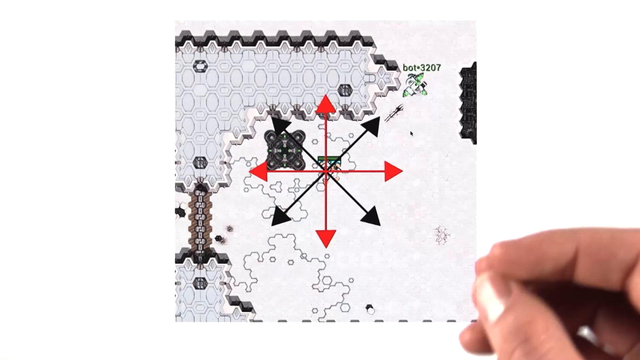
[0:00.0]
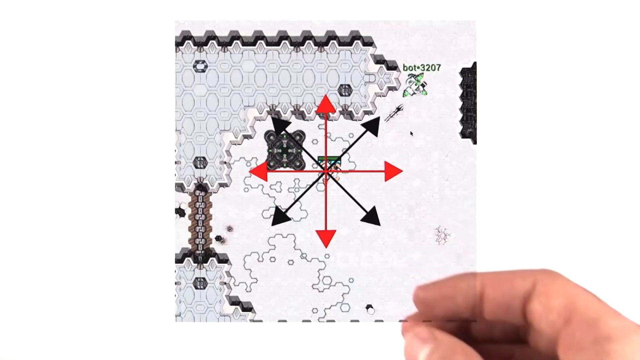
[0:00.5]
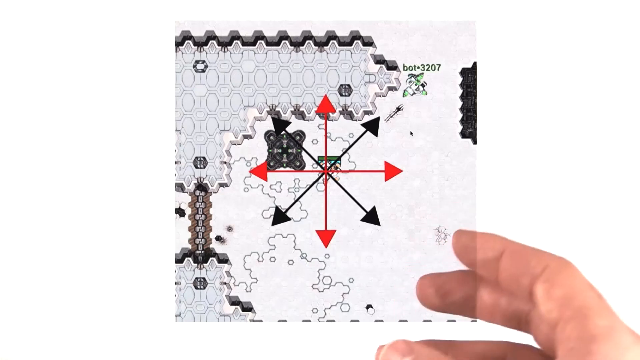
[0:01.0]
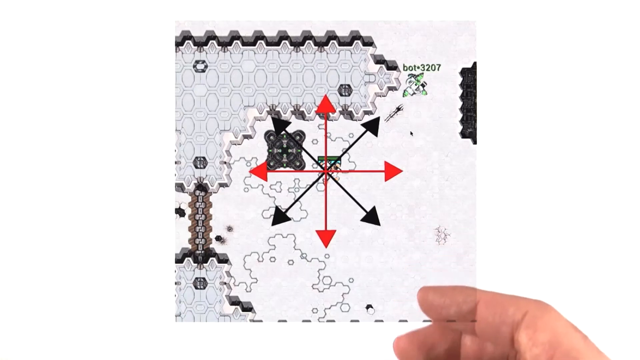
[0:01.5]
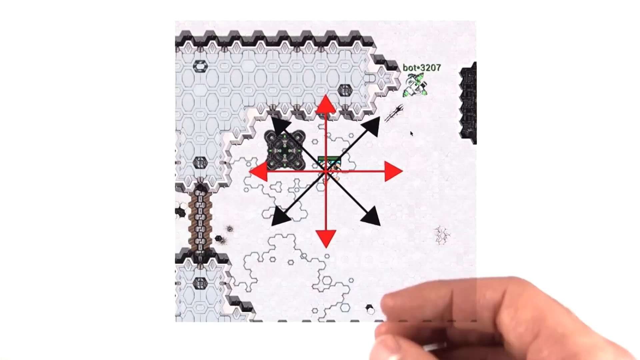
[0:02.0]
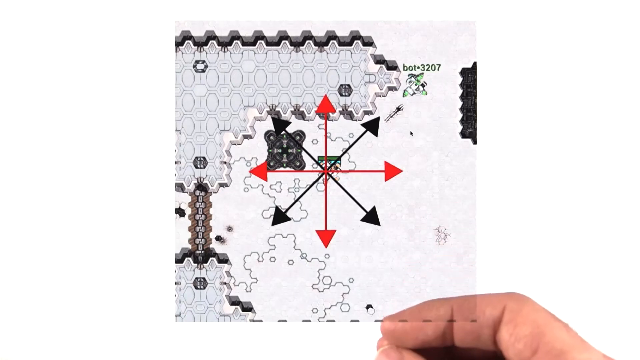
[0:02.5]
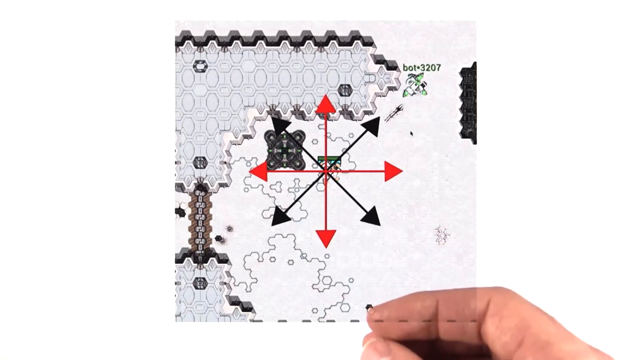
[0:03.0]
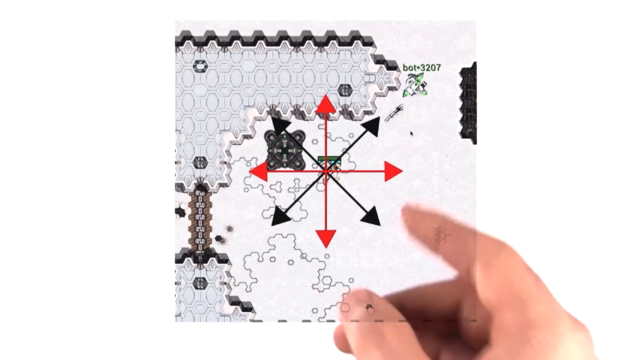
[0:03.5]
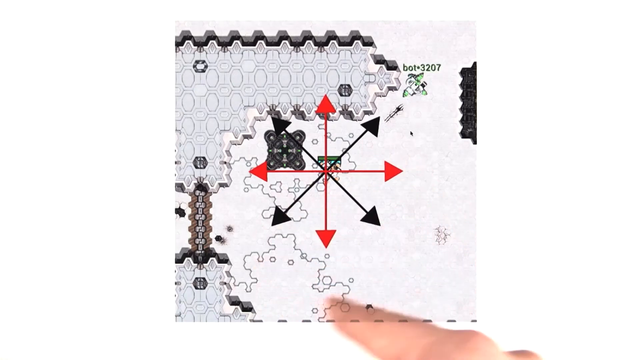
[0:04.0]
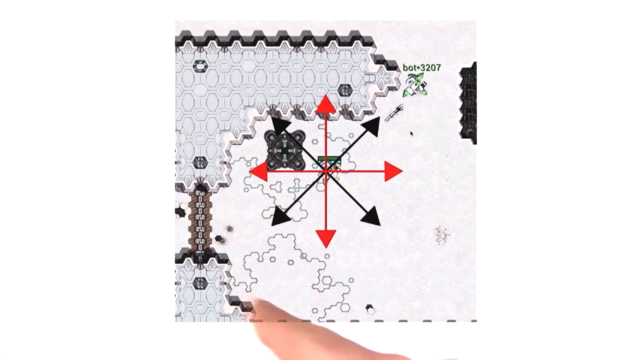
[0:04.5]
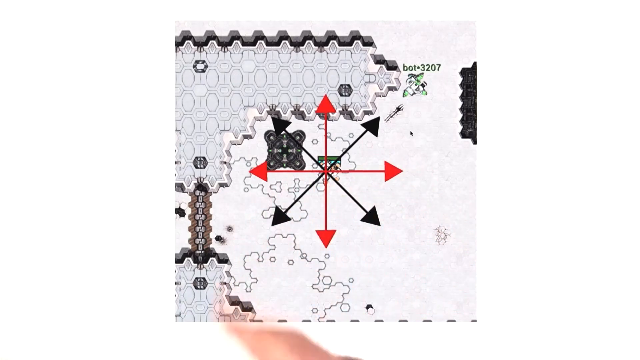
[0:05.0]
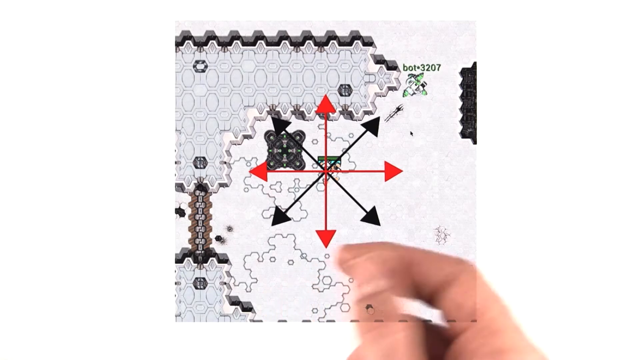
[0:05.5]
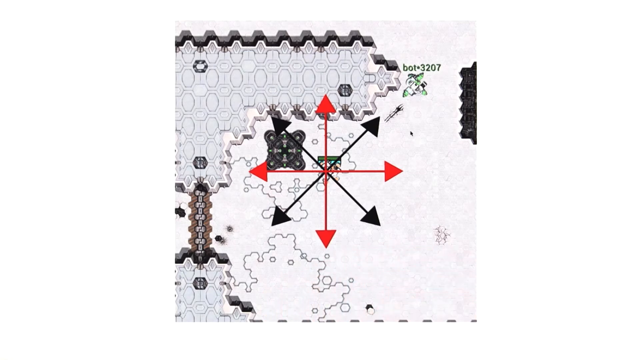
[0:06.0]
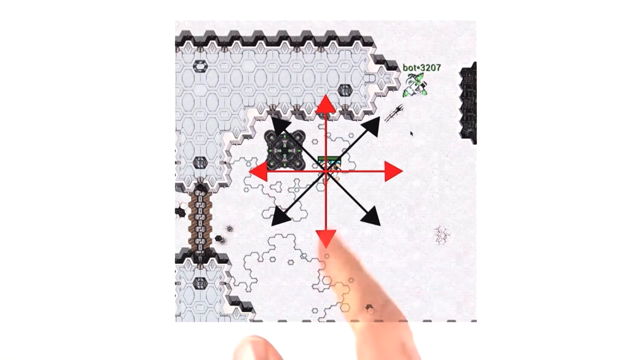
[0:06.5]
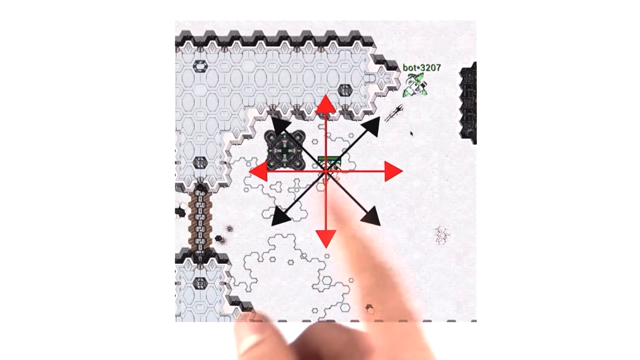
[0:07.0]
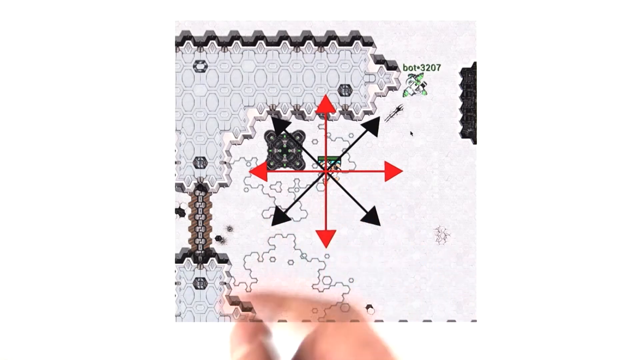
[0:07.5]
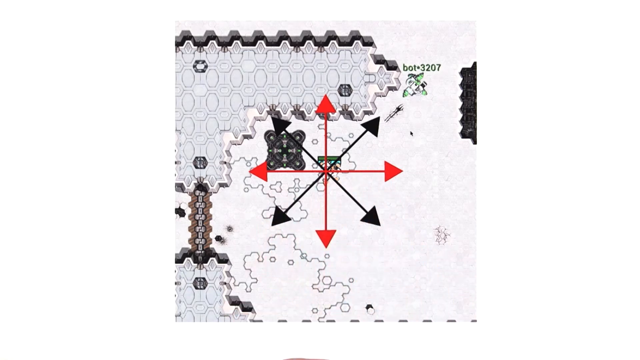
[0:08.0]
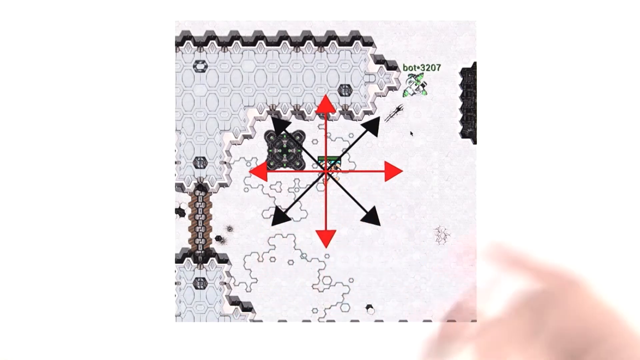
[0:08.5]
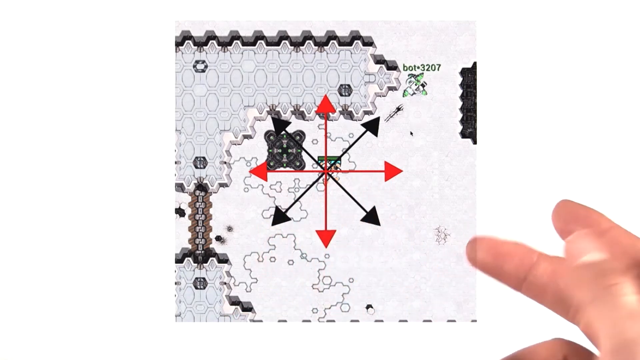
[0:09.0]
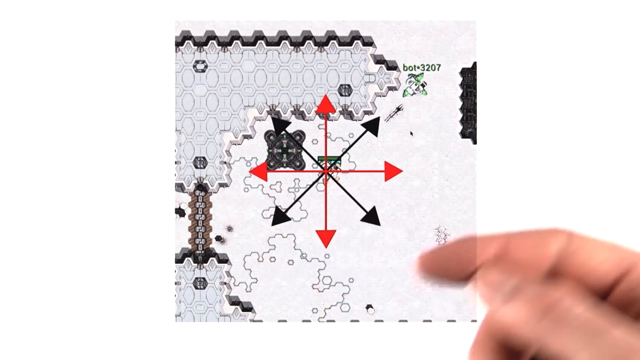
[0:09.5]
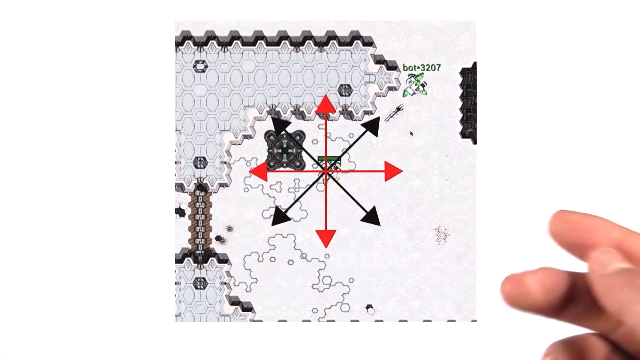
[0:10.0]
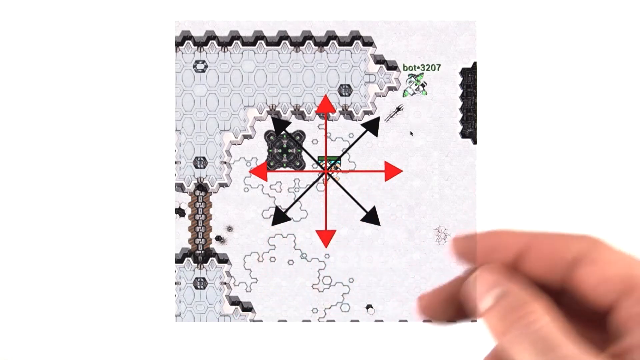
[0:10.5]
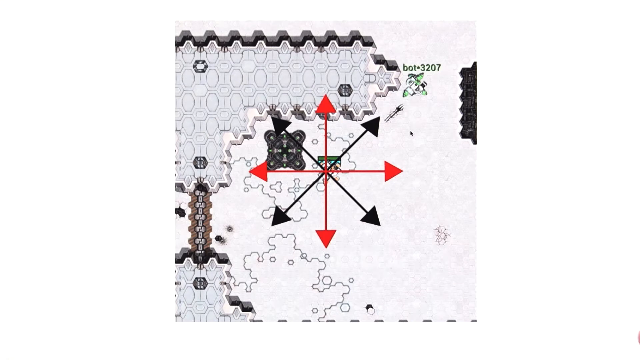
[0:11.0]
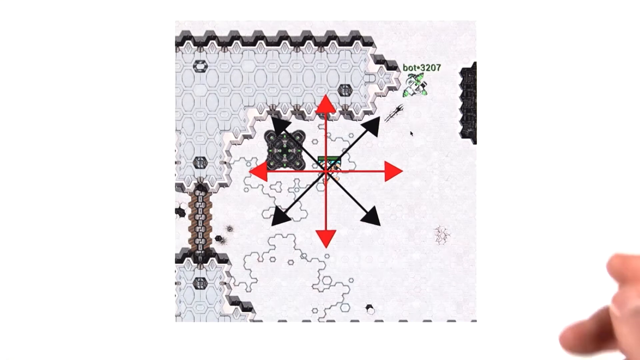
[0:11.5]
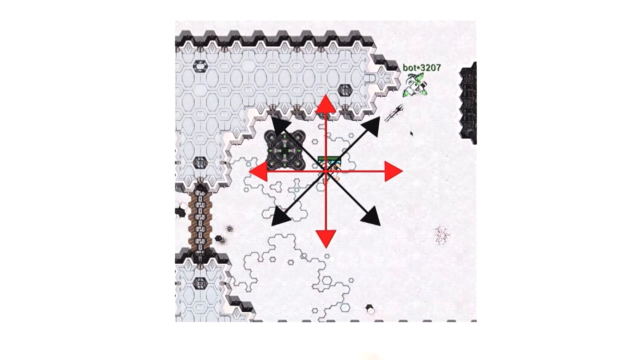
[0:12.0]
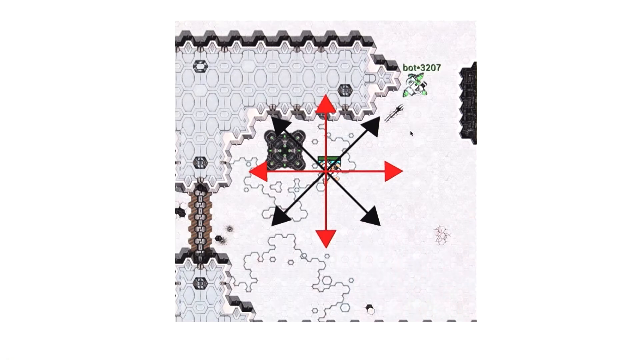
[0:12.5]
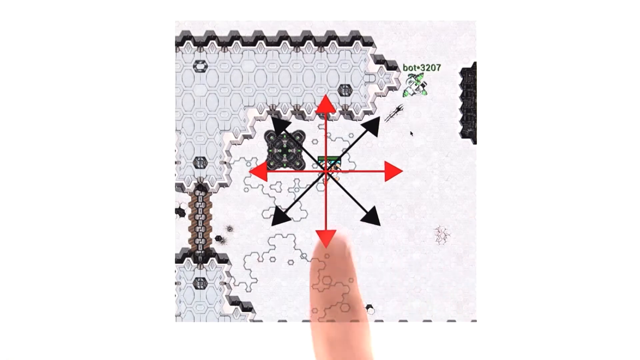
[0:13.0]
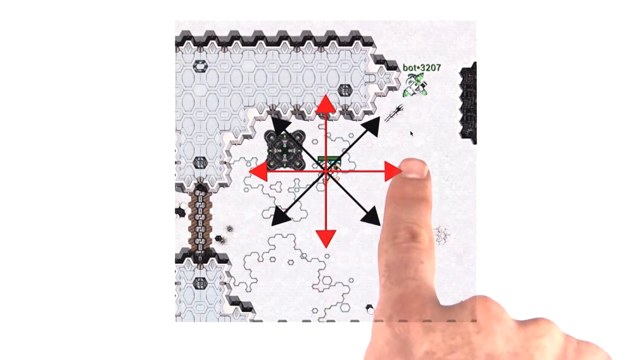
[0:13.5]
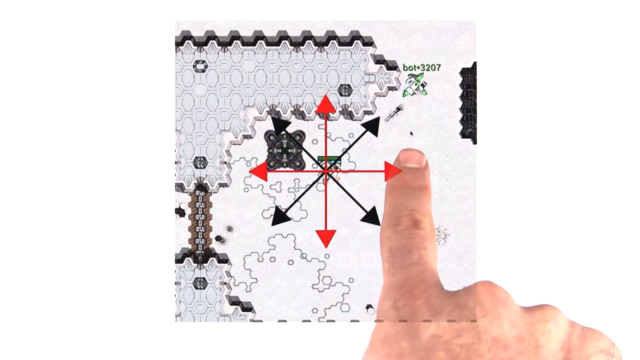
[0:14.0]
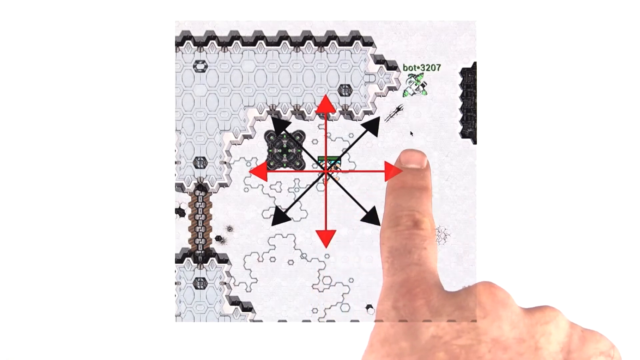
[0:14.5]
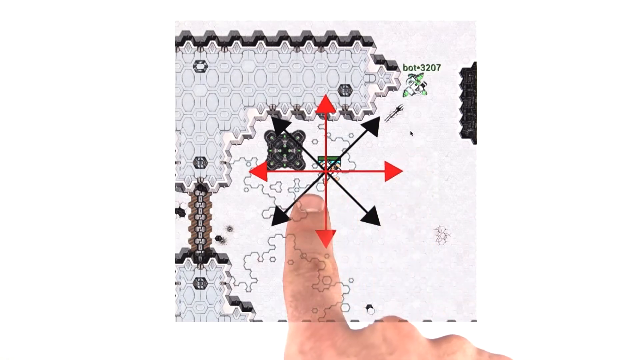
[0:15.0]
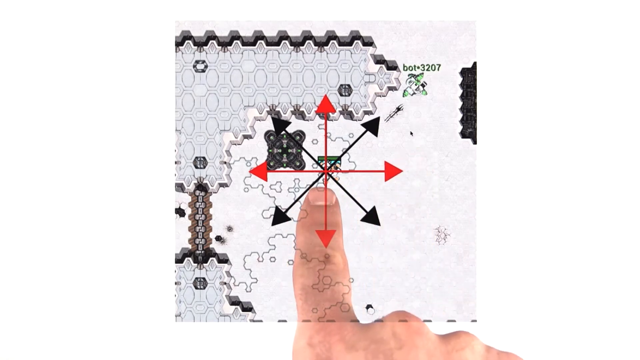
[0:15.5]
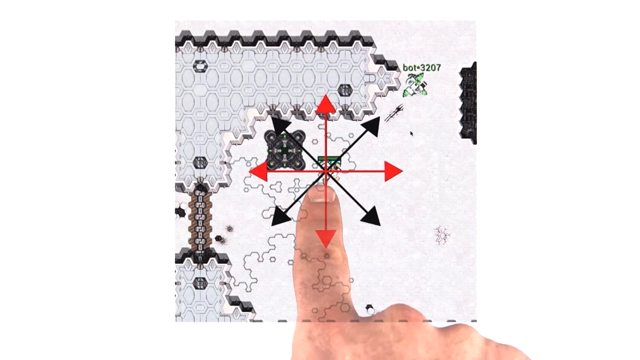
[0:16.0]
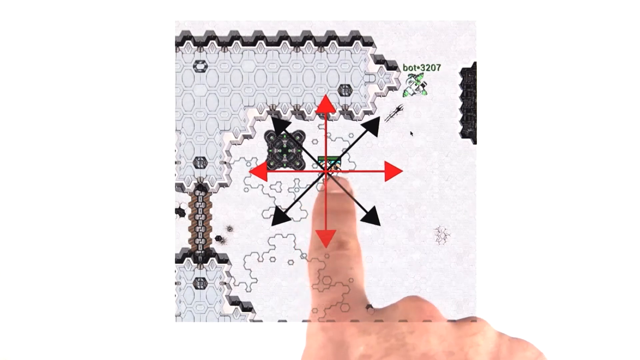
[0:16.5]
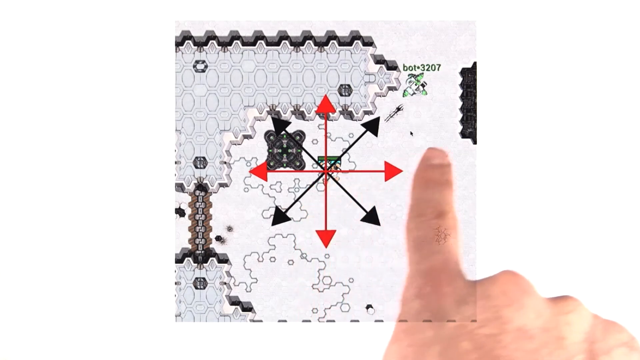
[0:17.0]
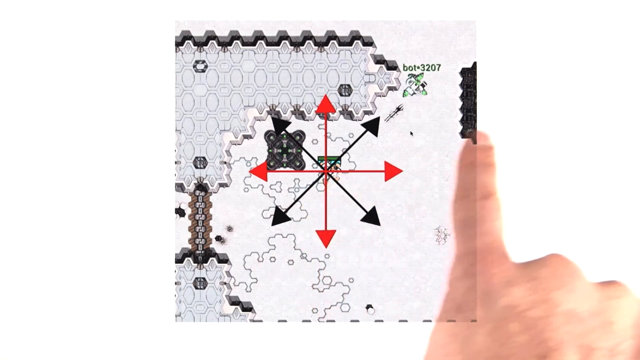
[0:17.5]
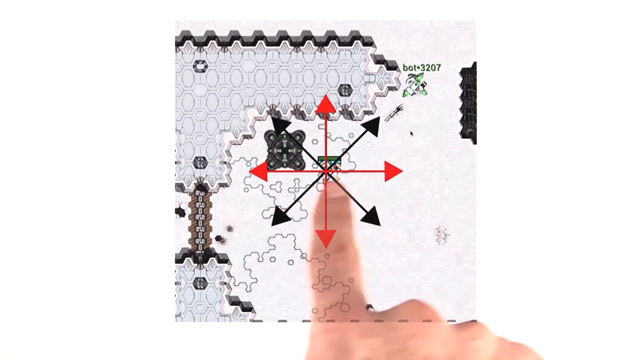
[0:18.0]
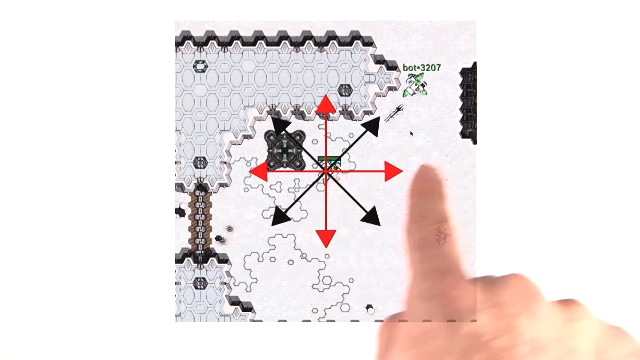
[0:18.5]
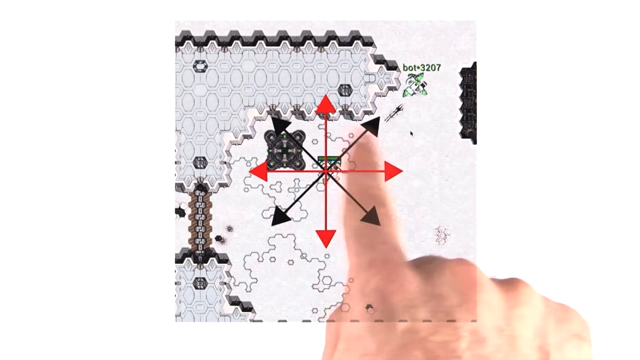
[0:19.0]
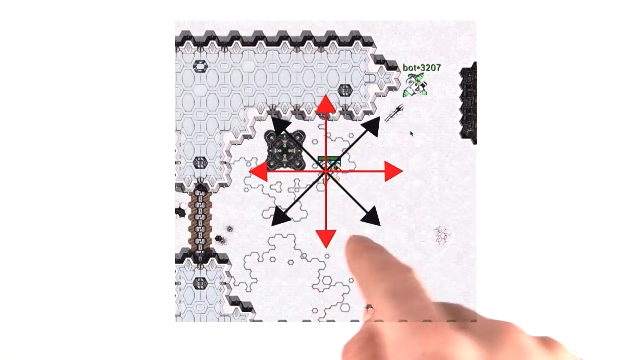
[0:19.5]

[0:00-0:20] A human hand is over a drawing of a game simulation environment. The setting is a grid-based map with a white background and black outlines, and the terrain consists of different patterns. To the top and left there is a structured honeycomb-like or hexagonal tile pattern, while the center and bottom have more irregular, organic-looking shapes that resemble sections of a map or cells. To the right, a solid black jagged wall runs along the top portion of the image. In the middle is a compass with arrows pointing in every direction, alternating between black and red with each arrow. In the top right, "bot 3207" appears above an image. The hand, which has a lighter, Caucasian skin tone, points at different areas of the drawing and moves back and forth.